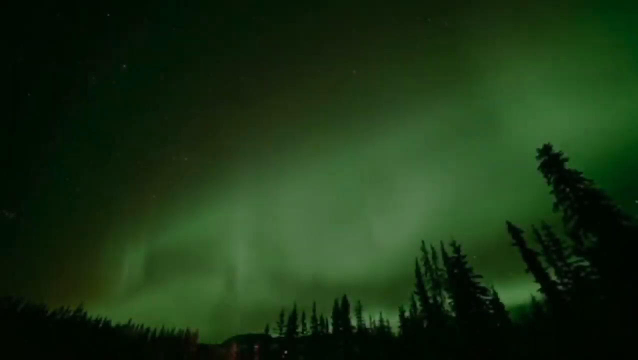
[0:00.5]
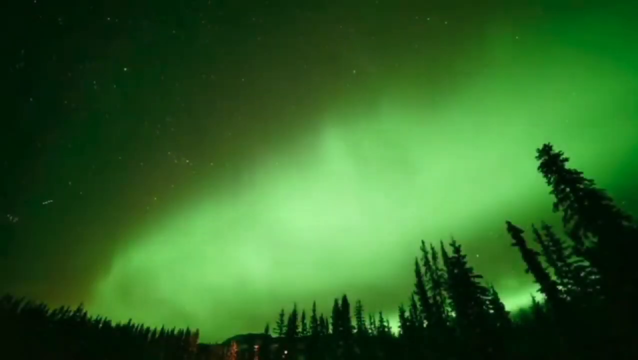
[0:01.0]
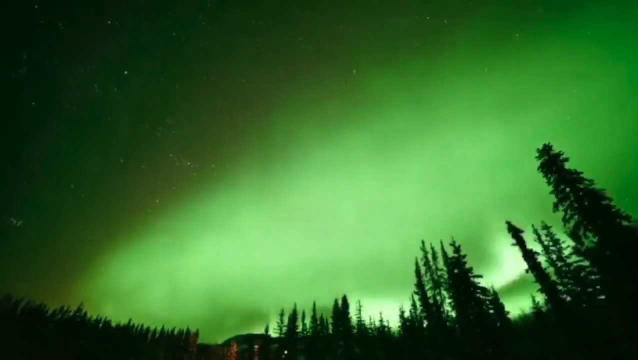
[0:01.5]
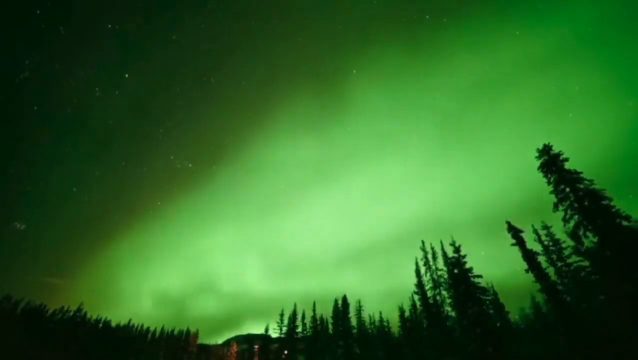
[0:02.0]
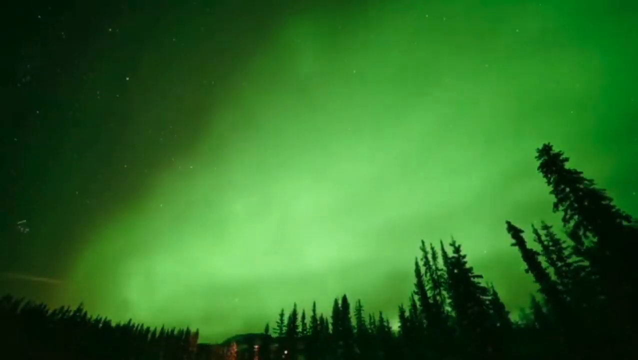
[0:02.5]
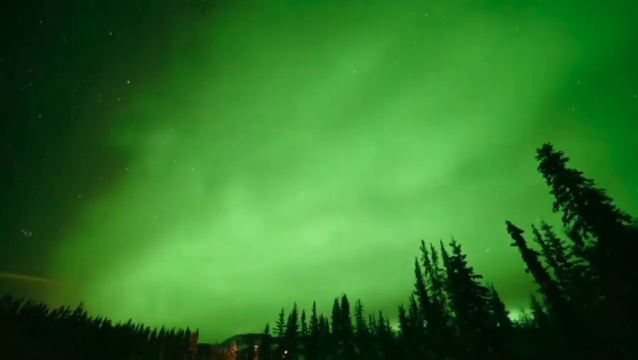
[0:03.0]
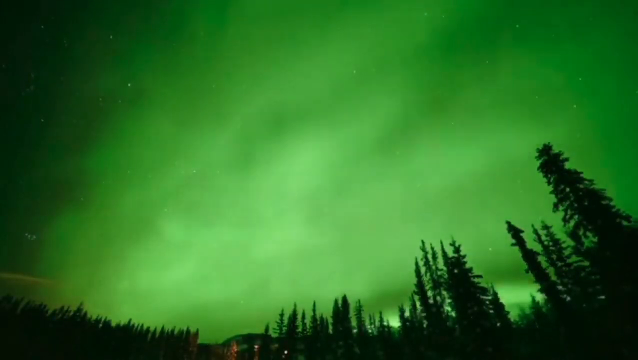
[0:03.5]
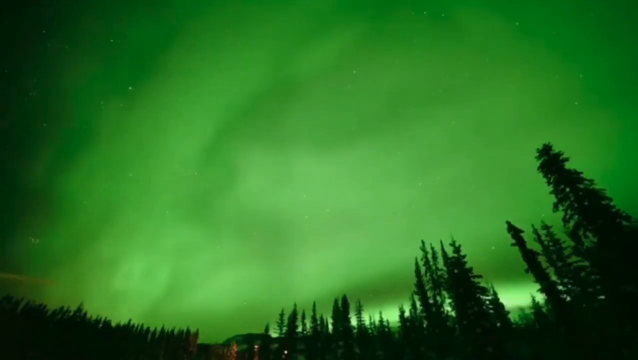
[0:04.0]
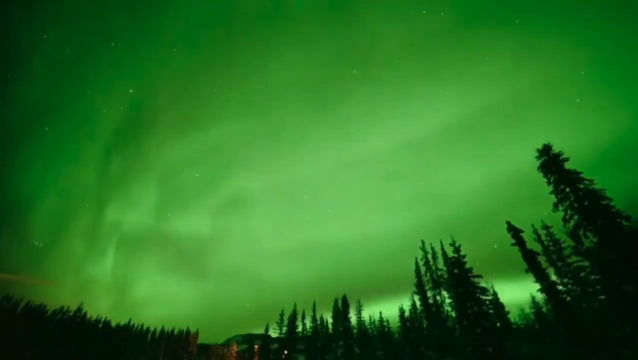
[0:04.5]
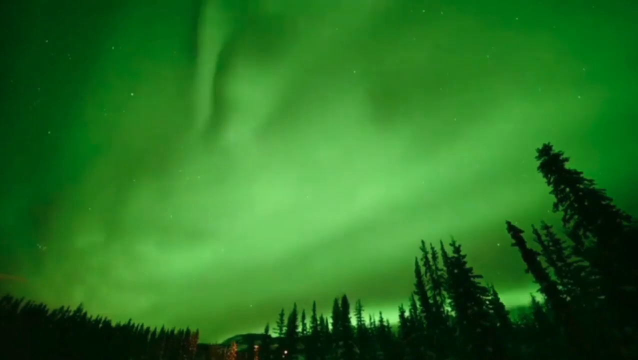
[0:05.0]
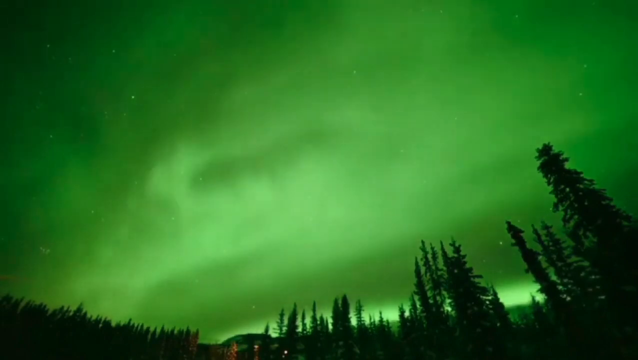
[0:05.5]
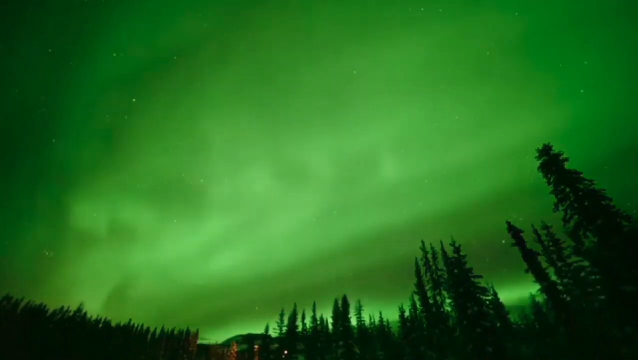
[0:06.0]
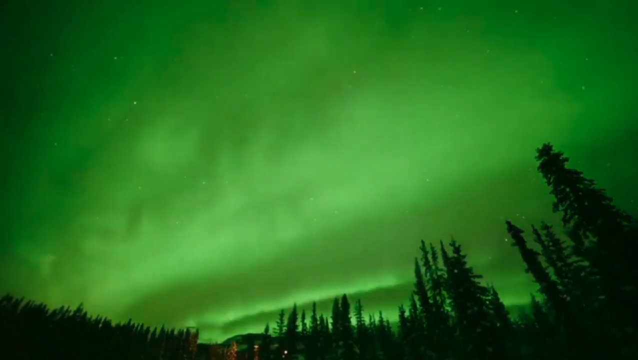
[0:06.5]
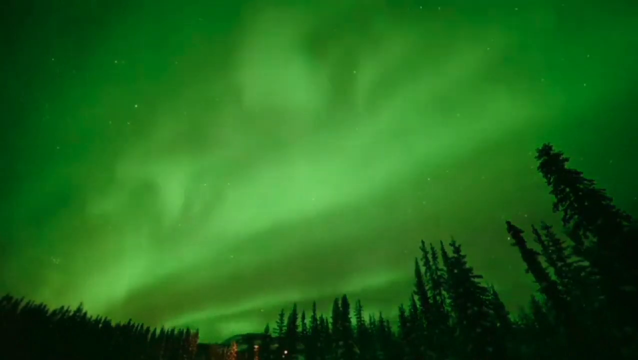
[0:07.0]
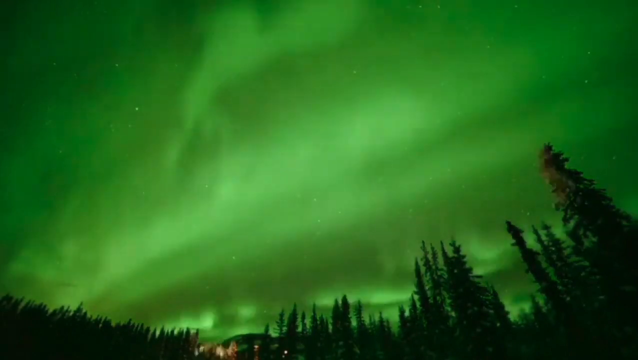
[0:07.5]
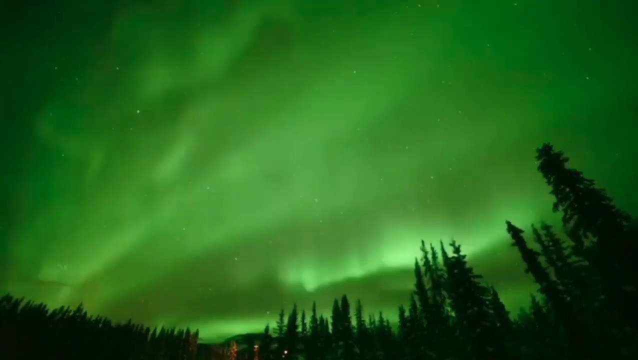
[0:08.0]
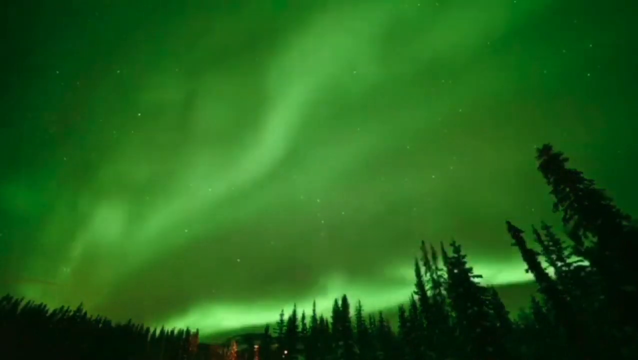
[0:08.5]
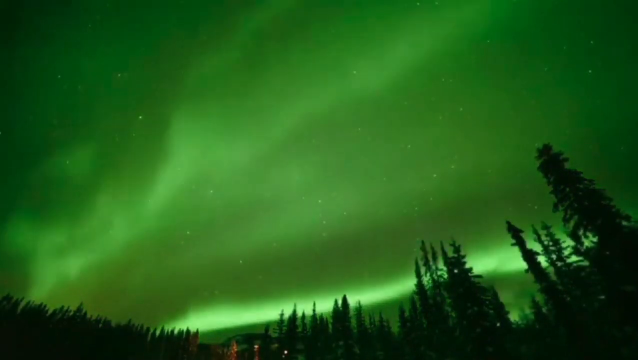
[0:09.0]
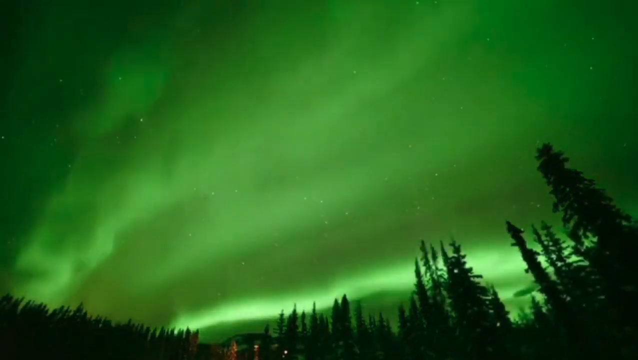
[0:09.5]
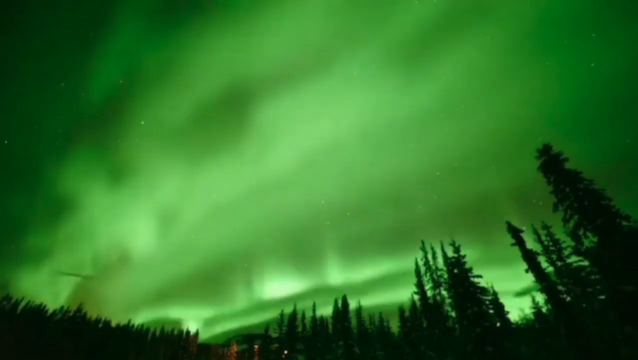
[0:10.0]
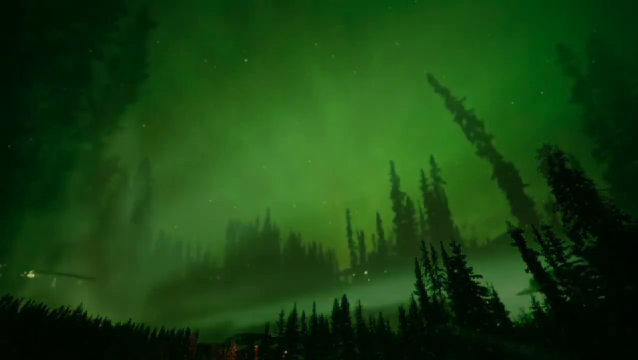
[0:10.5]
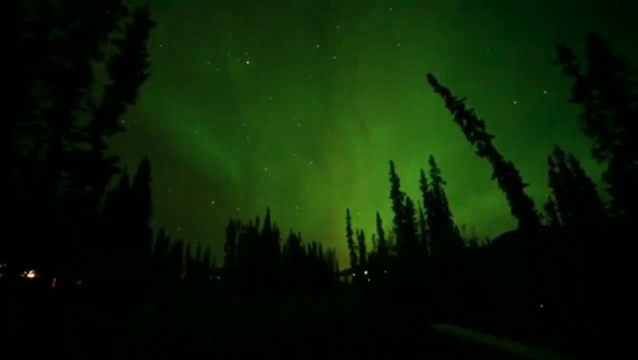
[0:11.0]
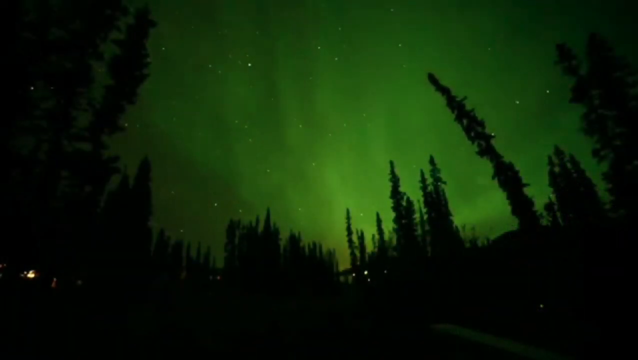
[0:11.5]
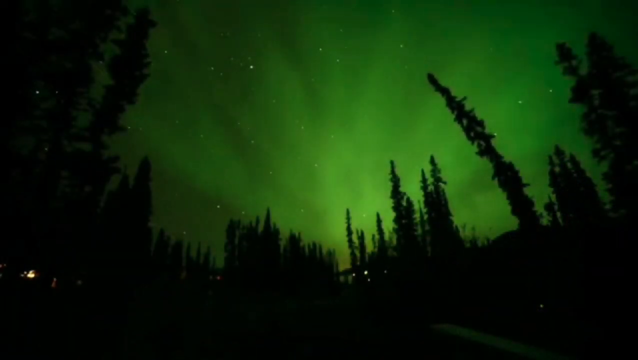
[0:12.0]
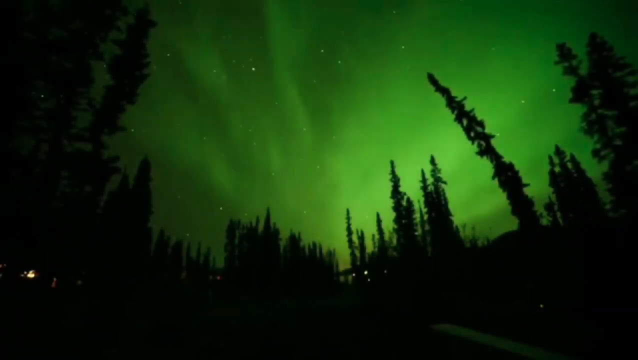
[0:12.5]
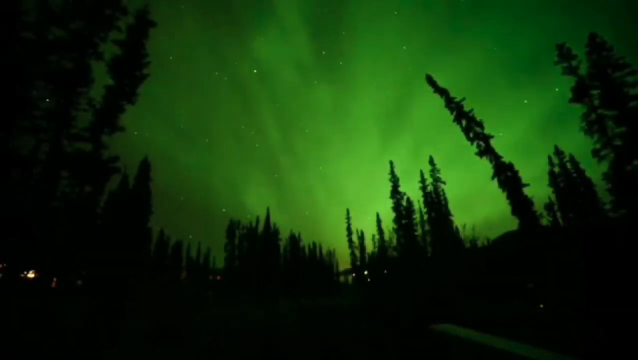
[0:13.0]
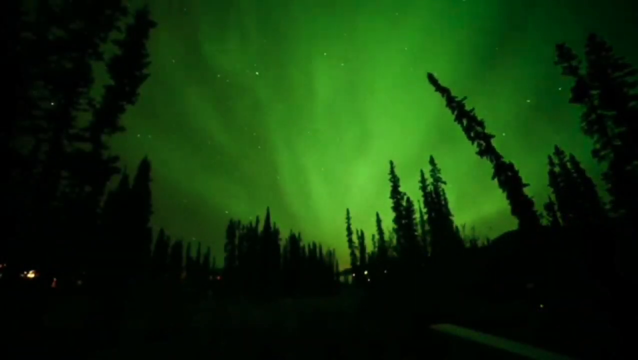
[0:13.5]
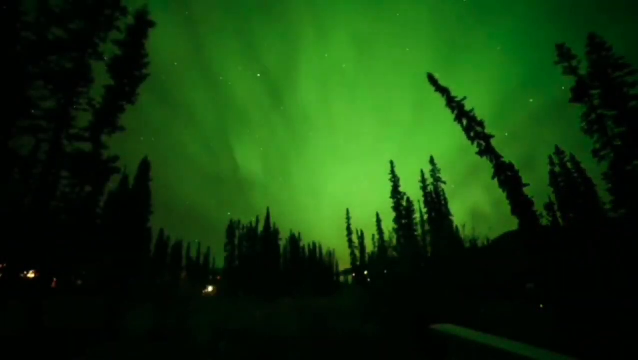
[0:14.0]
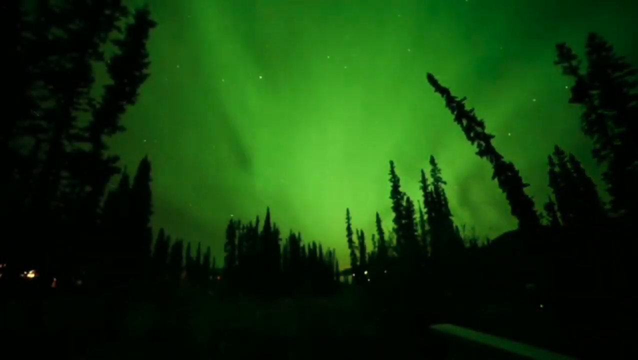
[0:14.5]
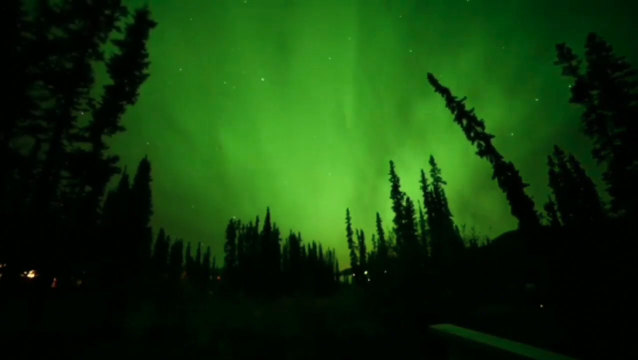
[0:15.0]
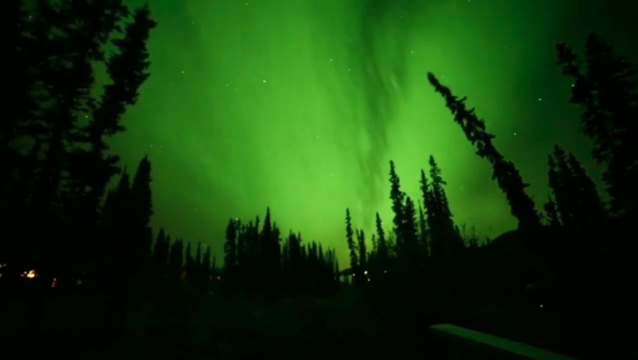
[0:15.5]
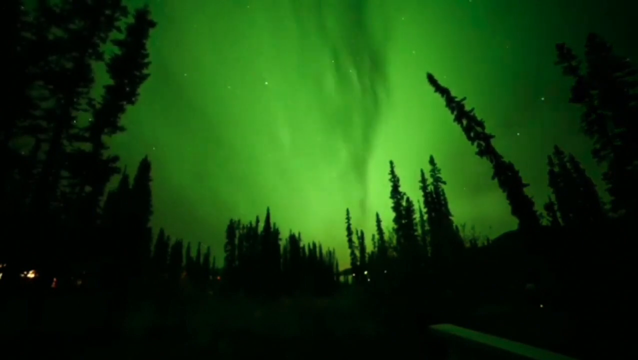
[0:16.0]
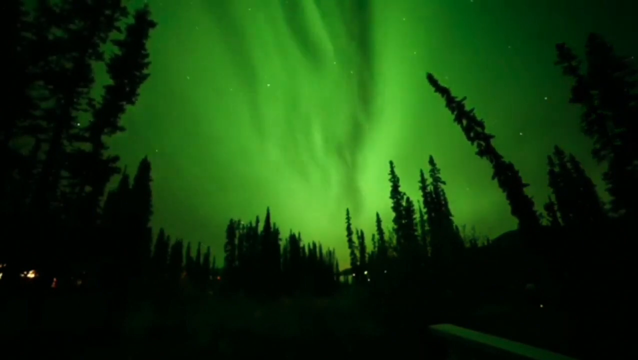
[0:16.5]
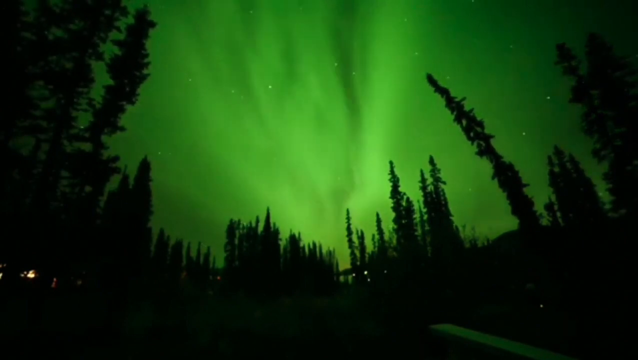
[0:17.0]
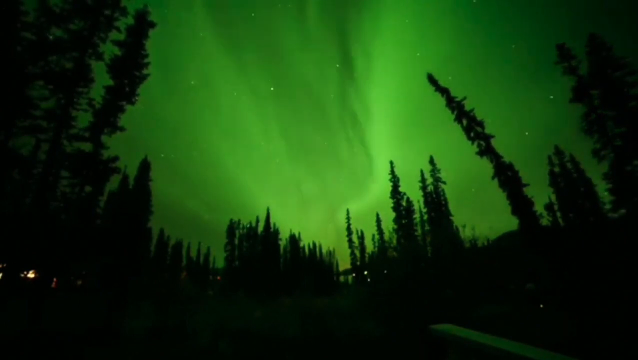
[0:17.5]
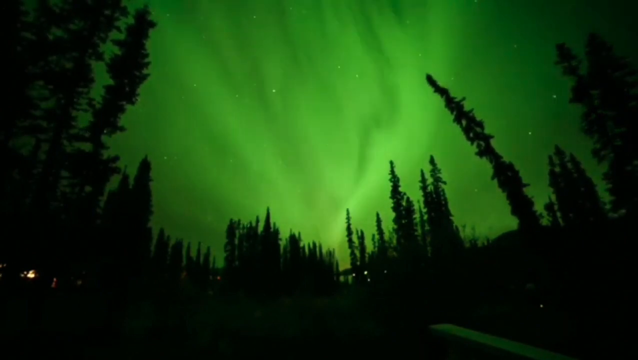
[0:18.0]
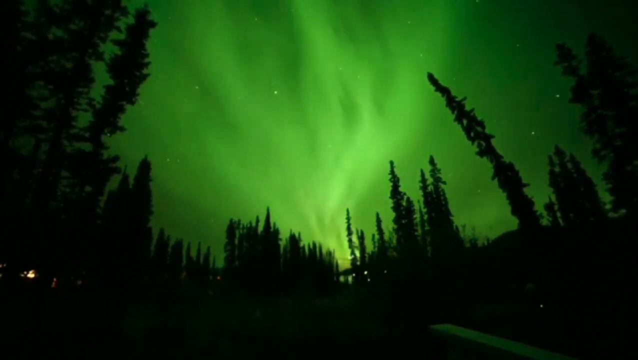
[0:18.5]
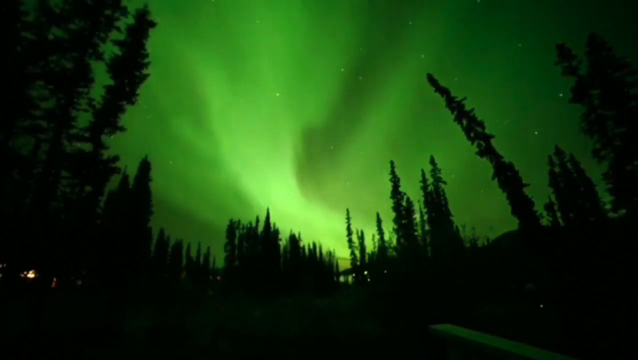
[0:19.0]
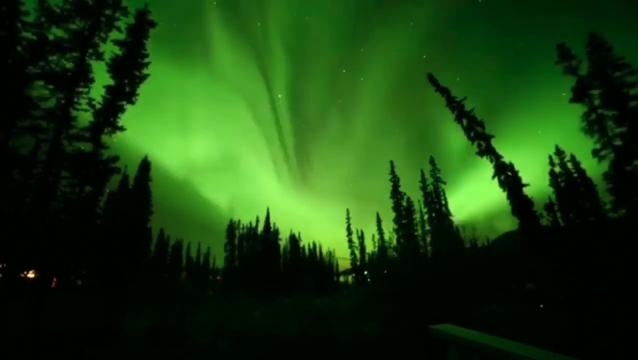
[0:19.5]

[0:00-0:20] An aurora fills the sky with green lights mixed with purple and red. At first green is the dominant color, moving across the sky. The rays apparently reflect on clouds that seem to be moving, forming patterns, some spiraling and some straight. The camera seems to be placed on the ground, so a few trees are visible from below, and one of them sways gently. The lights look like moving curtains or waves that keep changing shape as they slowly dance across the dark sky. The shot is primarily focused on the aurora.